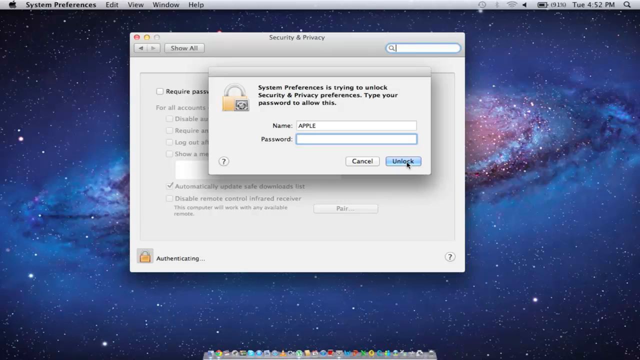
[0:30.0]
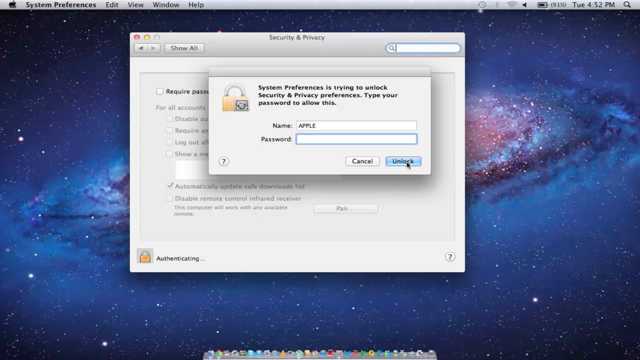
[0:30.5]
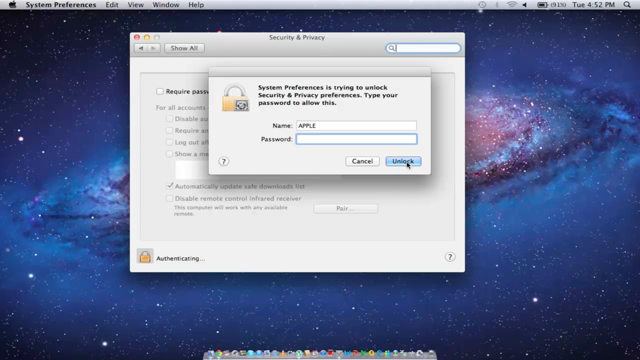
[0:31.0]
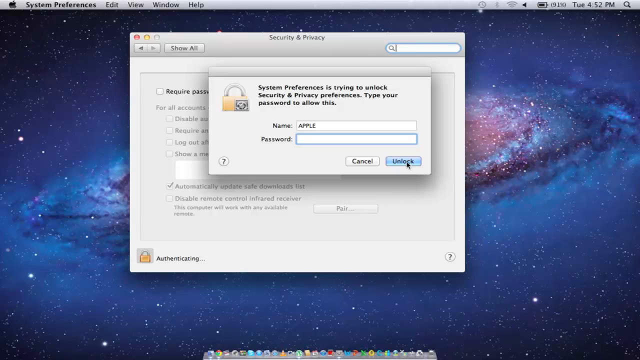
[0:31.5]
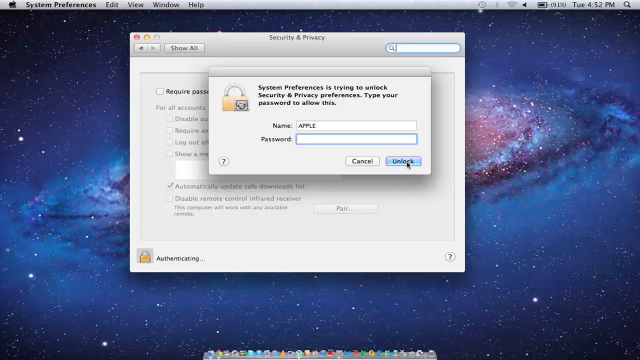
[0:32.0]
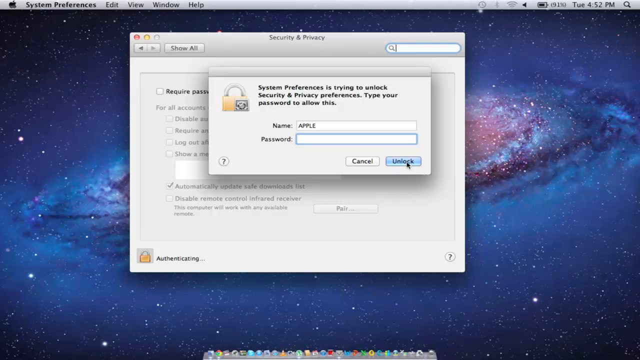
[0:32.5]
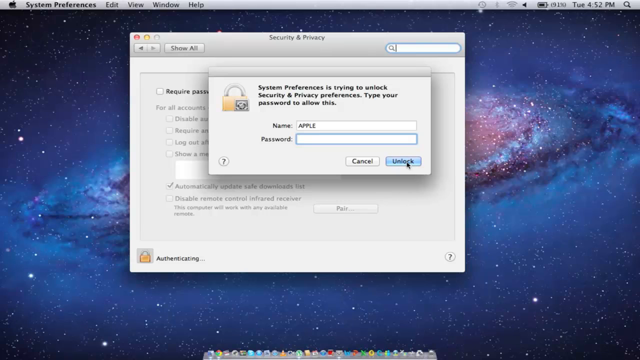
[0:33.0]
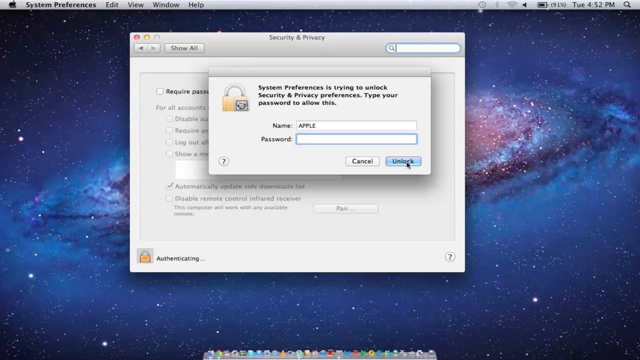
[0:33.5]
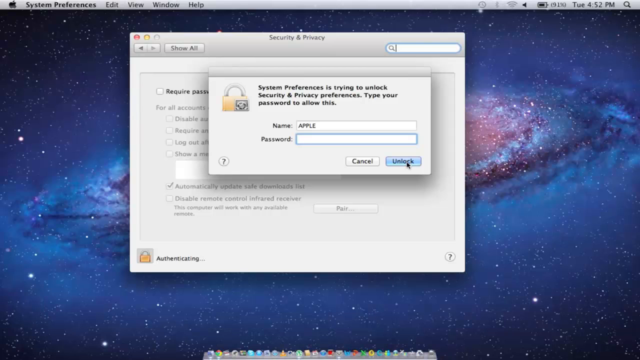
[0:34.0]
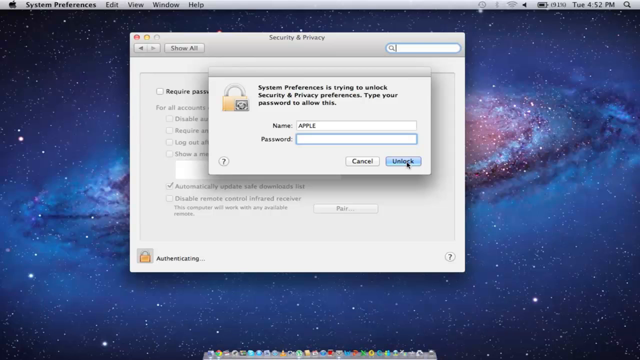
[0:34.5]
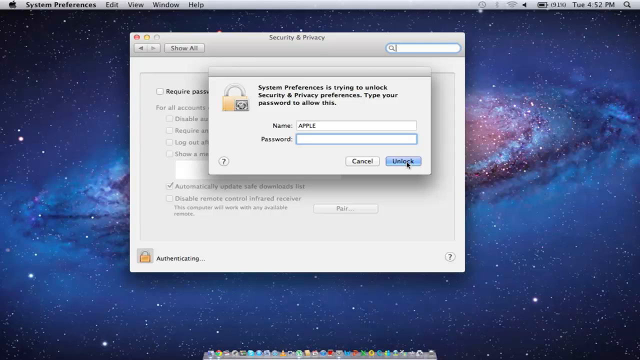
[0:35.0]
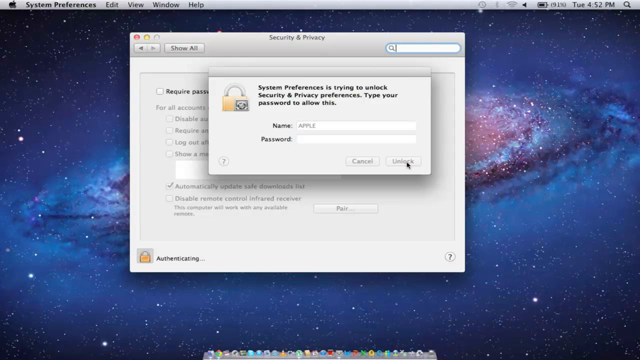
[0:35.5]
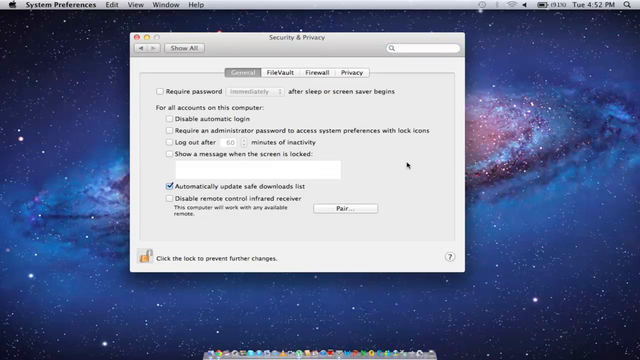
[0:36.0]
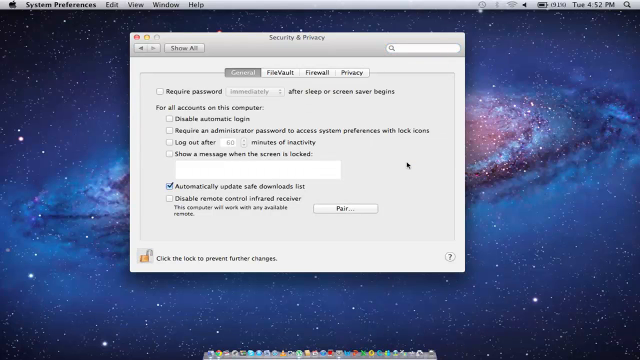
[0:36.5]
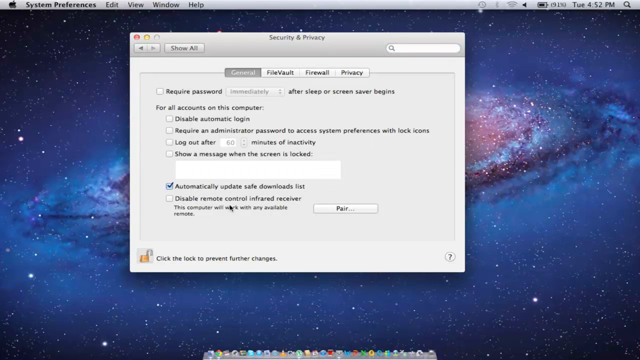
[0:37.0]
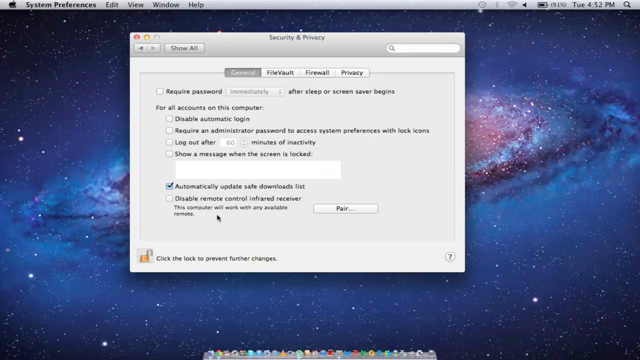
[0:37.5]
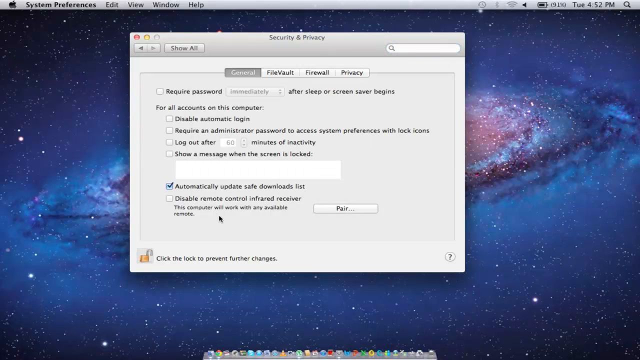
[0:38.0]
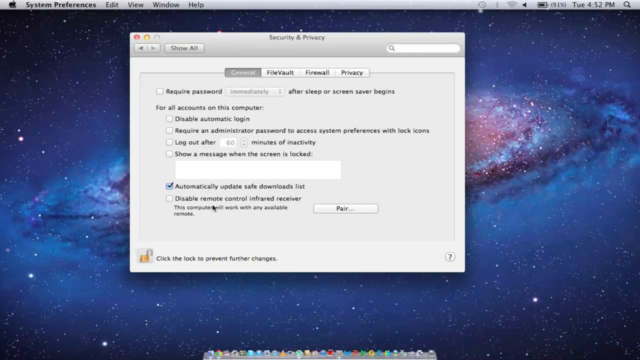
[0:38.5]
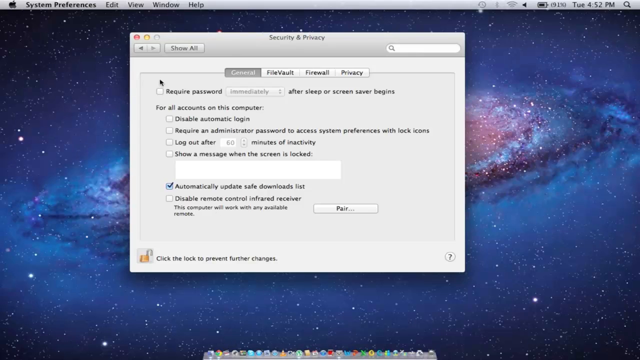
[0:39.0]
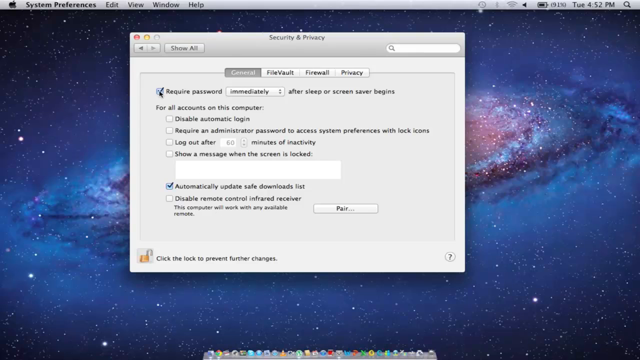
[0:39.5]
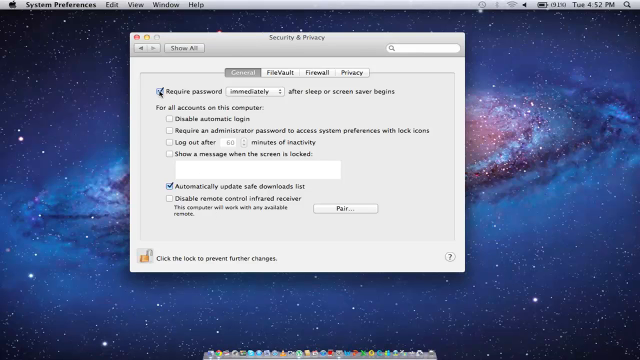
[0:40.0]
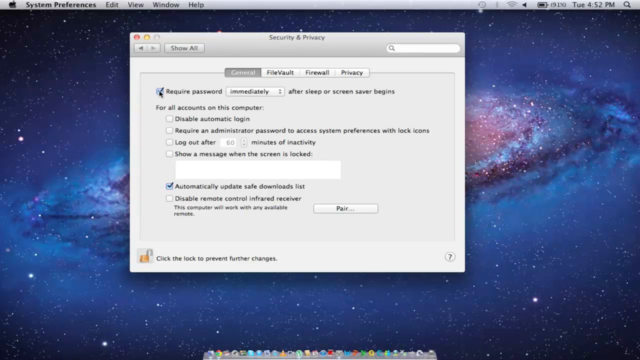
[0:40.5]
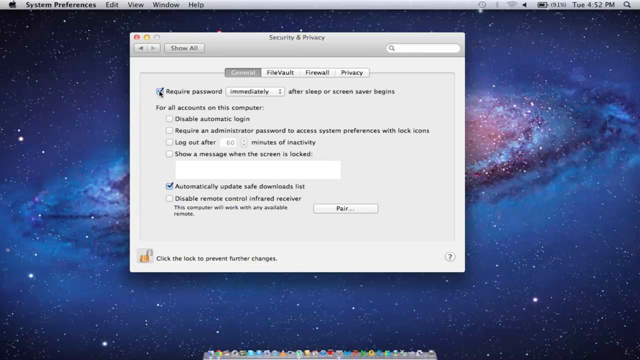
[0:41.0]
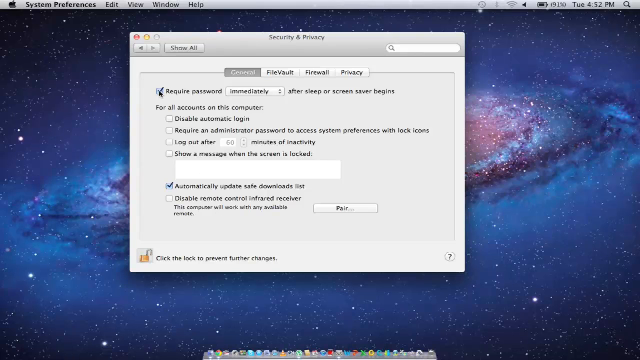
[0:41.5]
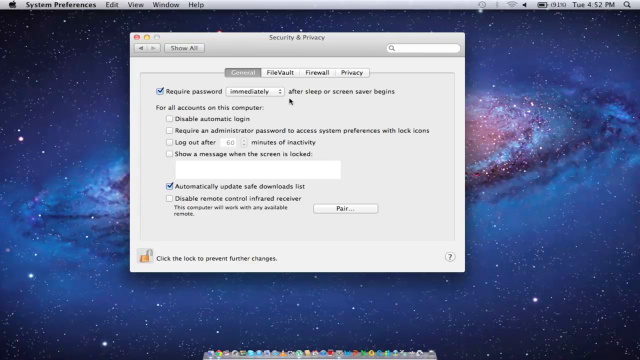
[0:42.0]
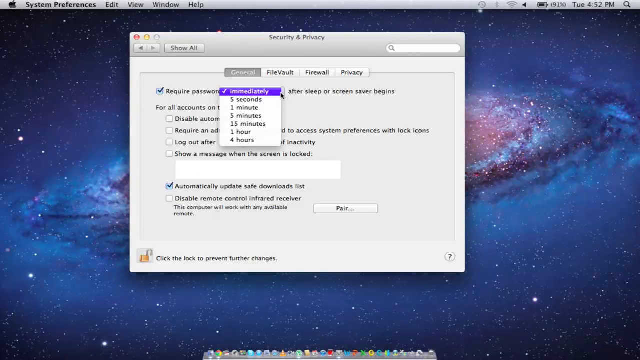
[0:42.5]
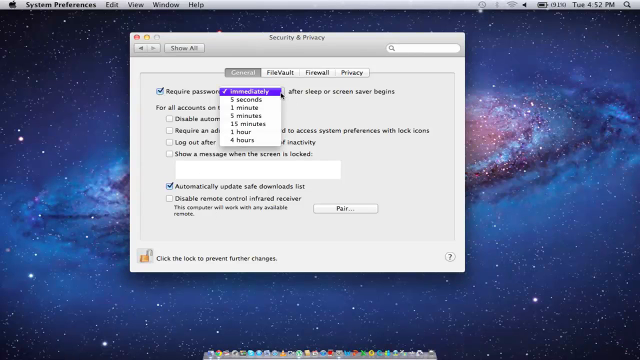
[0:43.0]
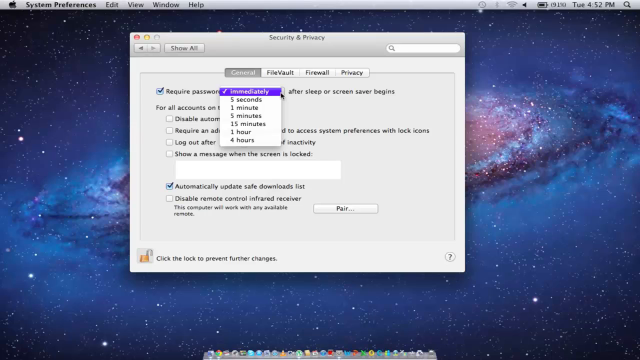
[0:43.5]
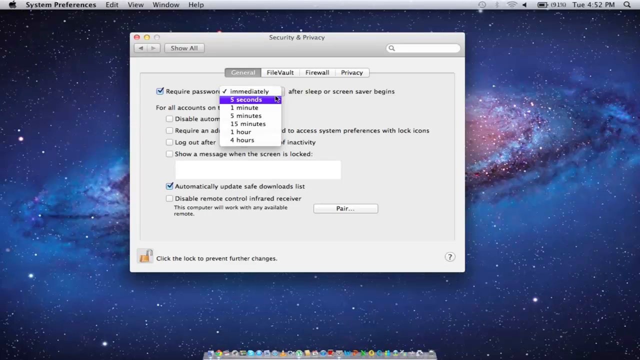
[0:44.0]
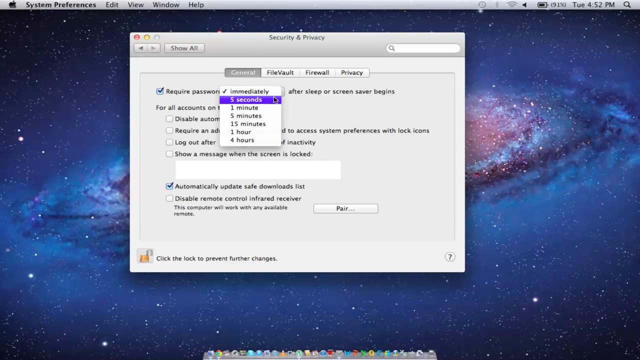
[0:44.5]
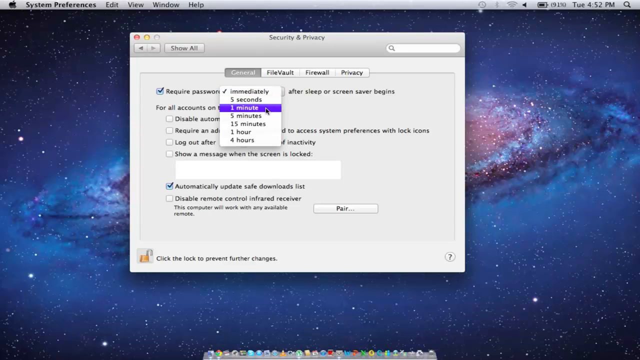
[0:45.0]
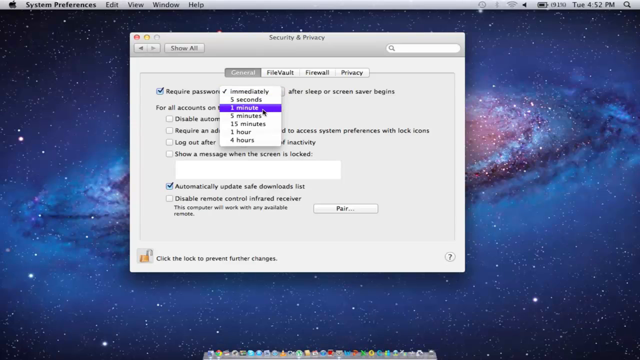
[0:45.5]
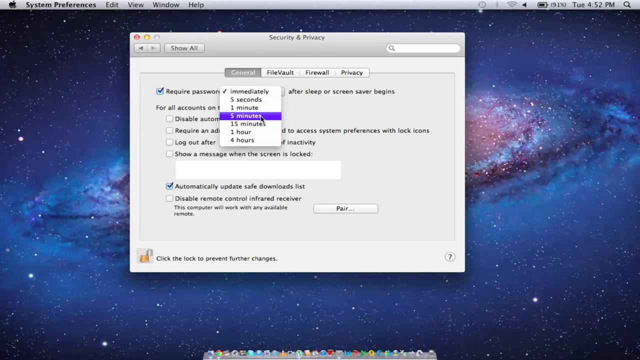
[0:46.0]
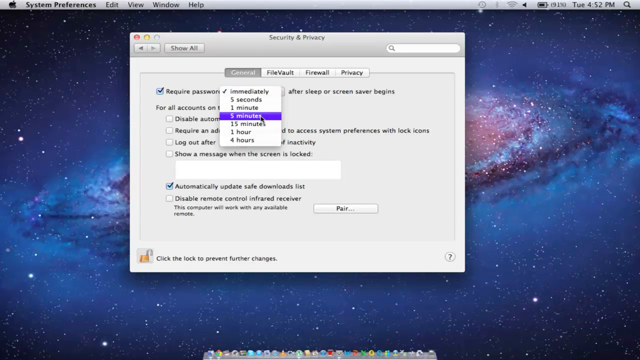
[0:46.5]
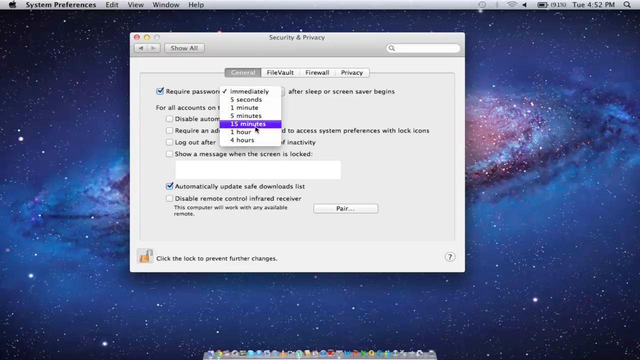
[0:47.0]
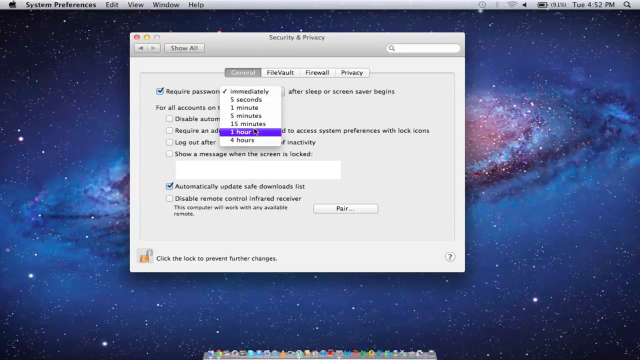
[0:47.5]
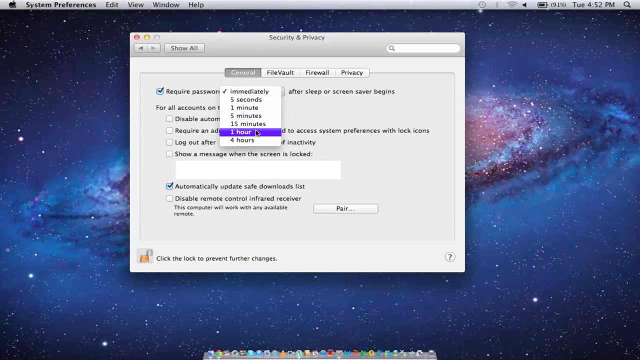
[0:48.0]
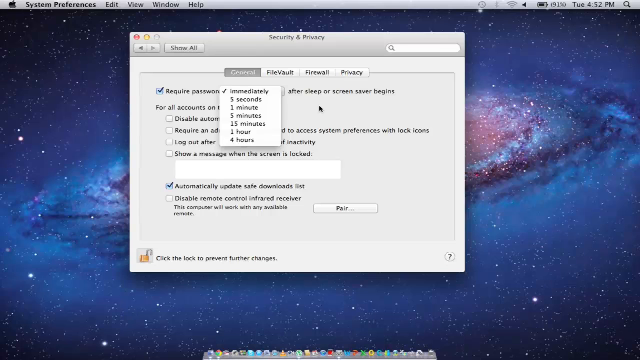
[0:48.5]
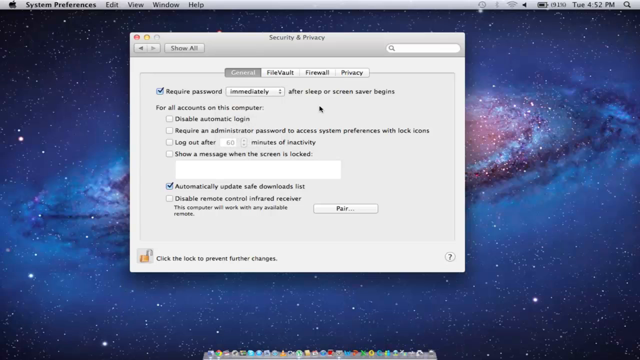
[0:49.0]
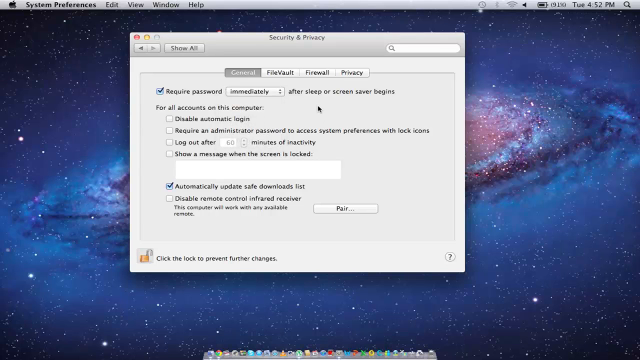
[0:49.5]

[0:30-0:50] After a click, a prompt appears asking for a name and password. The text at the top reads "System Preferences is trying to unlock security and privacy performance. Type your password." Apparently security and privacy has been clicked. A key sign is shown, and below it is a name label with an empty field to fill in, then a password field below that, and at the bottom a cancel button and an unlock button. The unlock button is pressed, and a set of options with tick boxes appears. A box is ticked for the required password option, and at the bottom there is "automatically update safe download list".